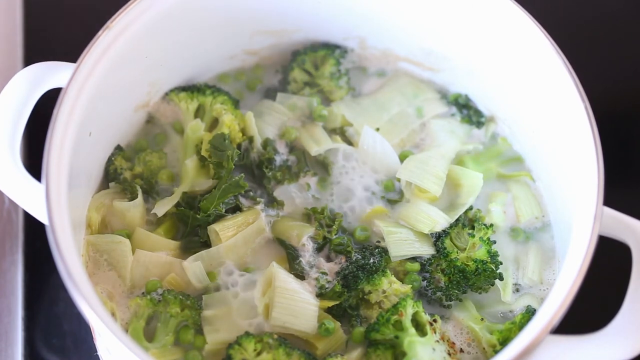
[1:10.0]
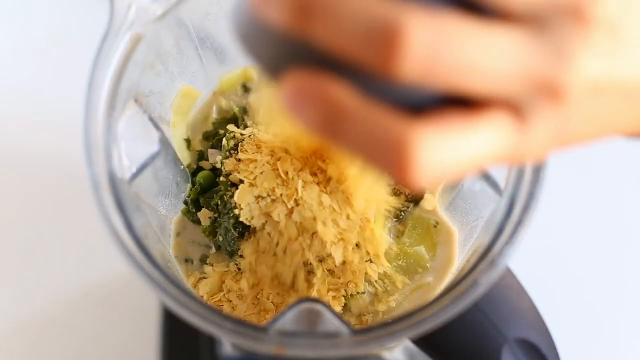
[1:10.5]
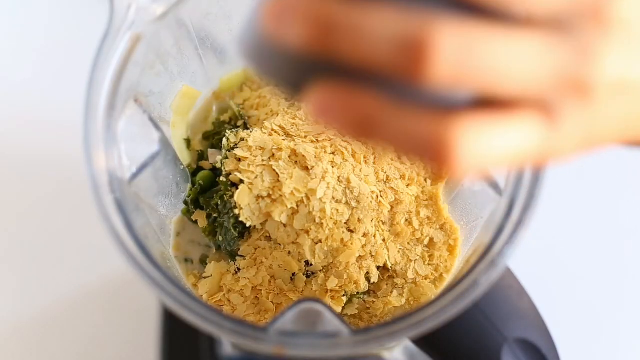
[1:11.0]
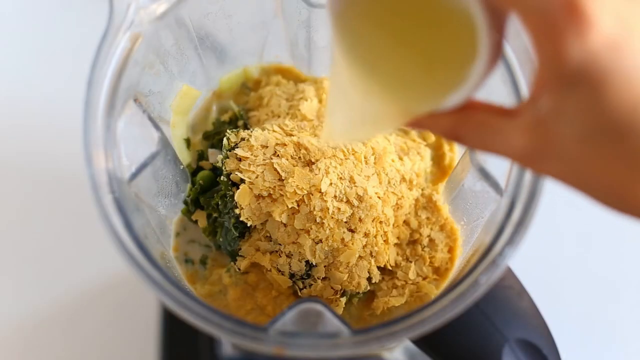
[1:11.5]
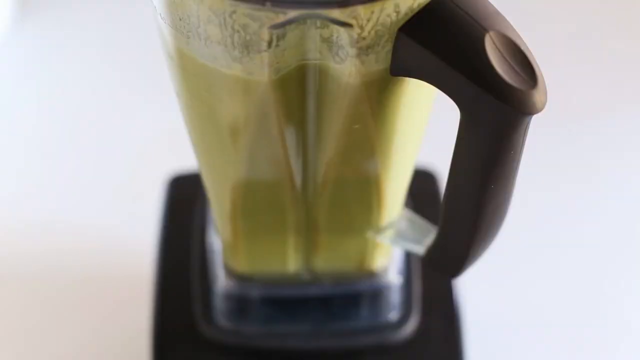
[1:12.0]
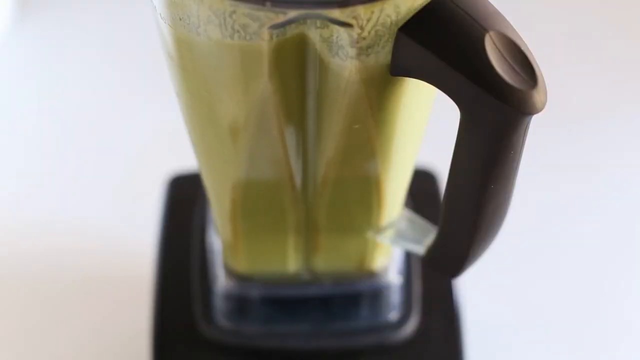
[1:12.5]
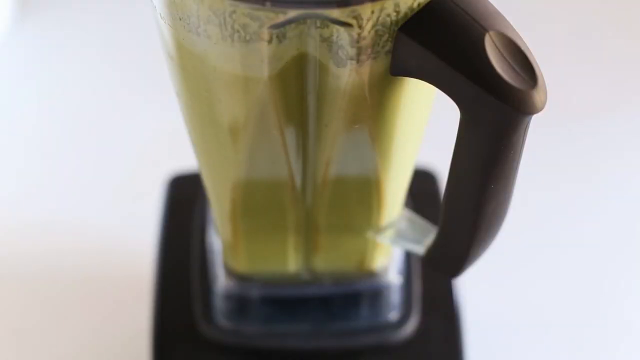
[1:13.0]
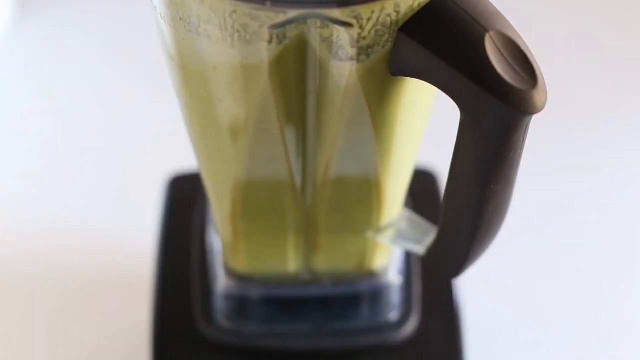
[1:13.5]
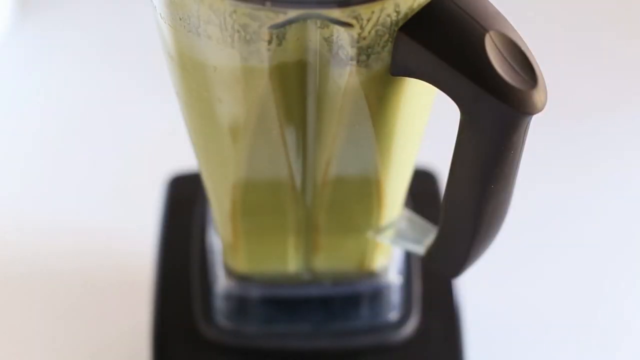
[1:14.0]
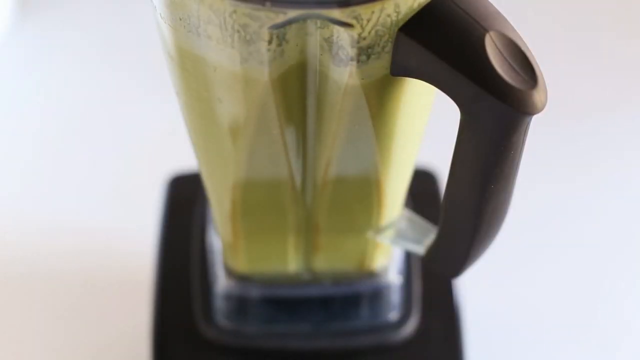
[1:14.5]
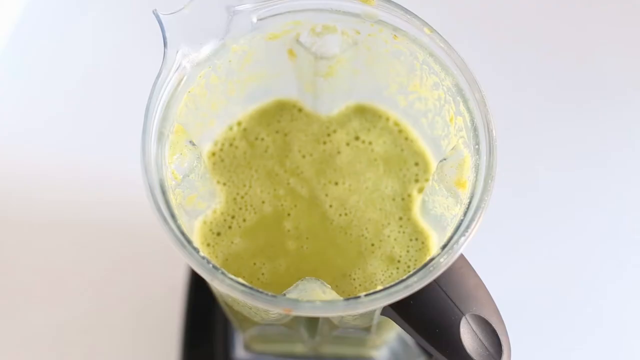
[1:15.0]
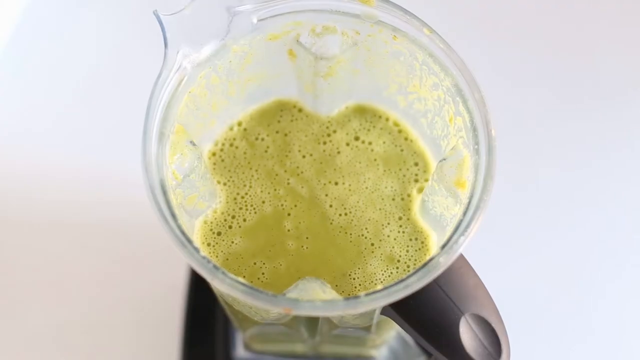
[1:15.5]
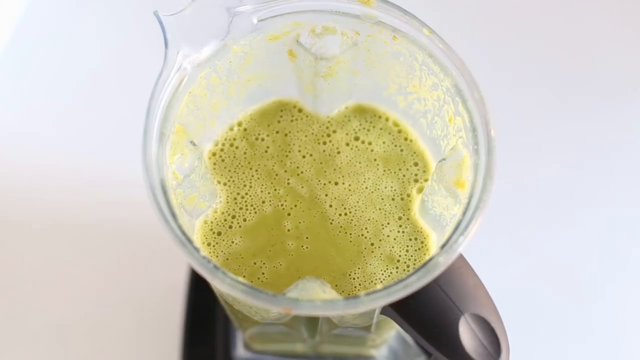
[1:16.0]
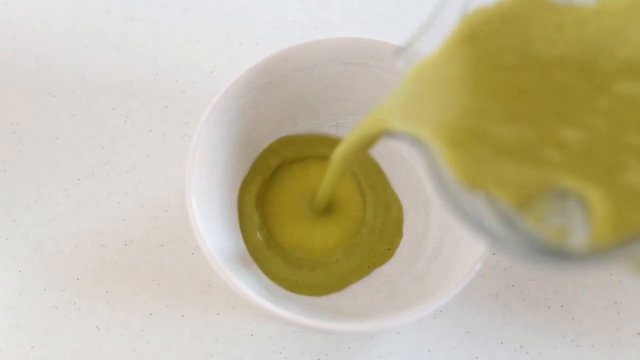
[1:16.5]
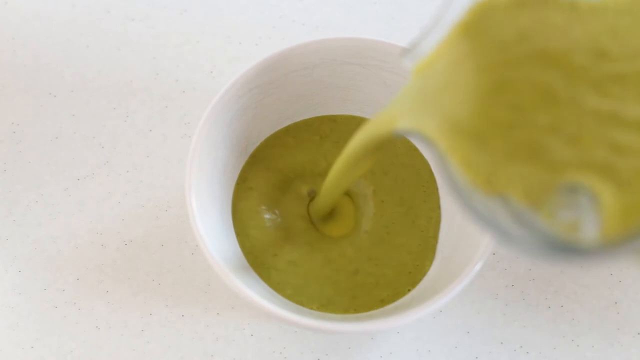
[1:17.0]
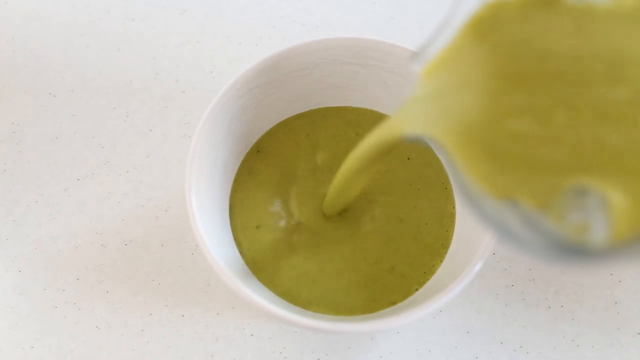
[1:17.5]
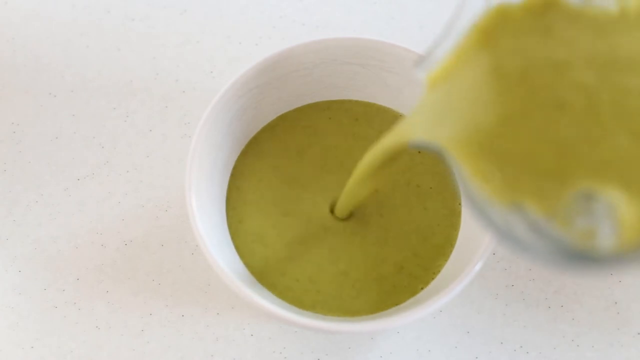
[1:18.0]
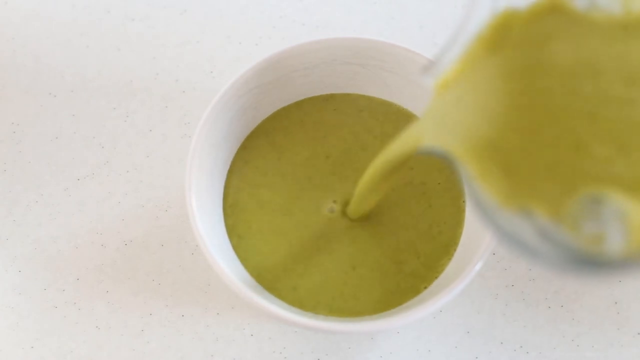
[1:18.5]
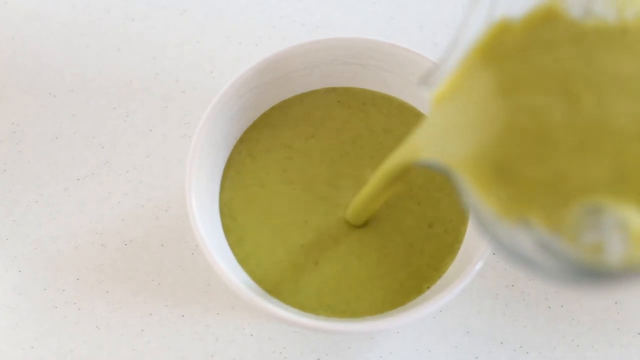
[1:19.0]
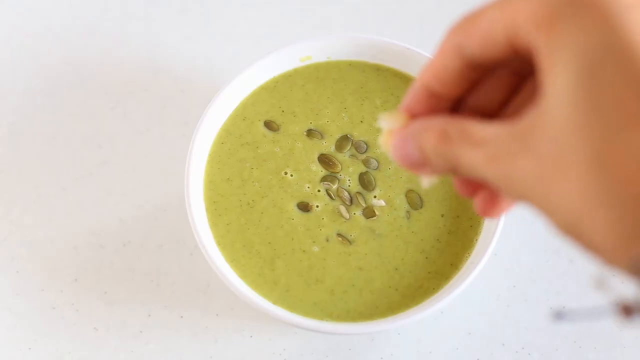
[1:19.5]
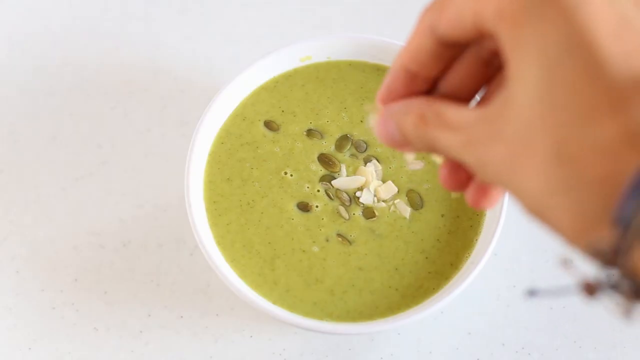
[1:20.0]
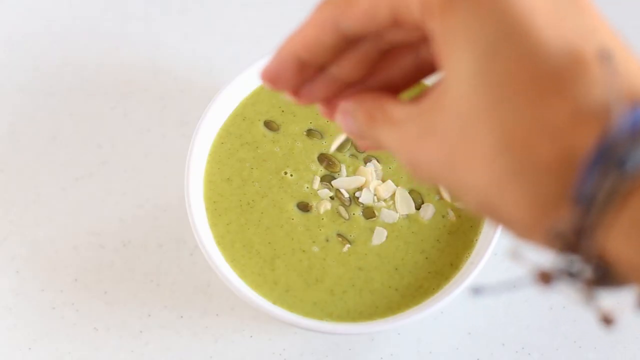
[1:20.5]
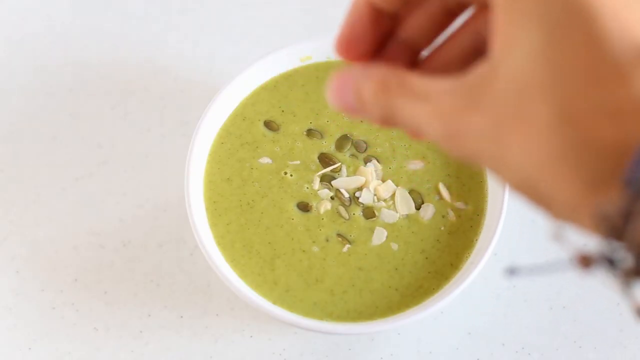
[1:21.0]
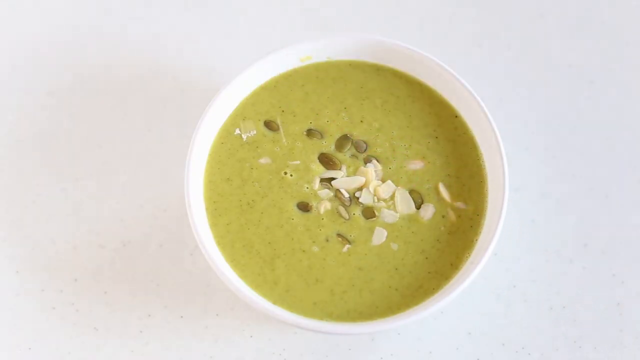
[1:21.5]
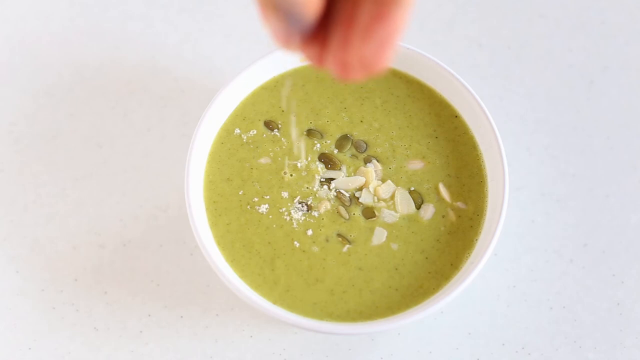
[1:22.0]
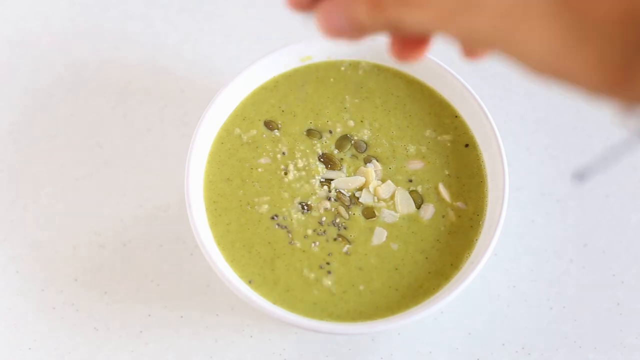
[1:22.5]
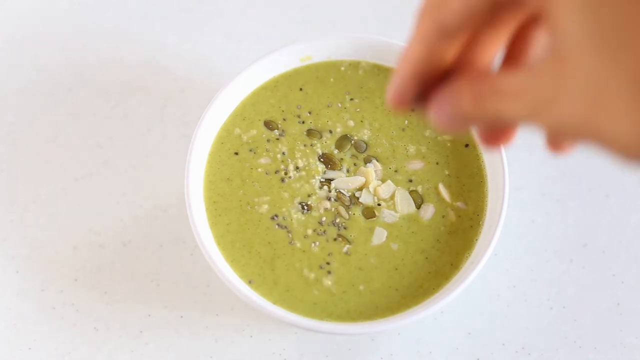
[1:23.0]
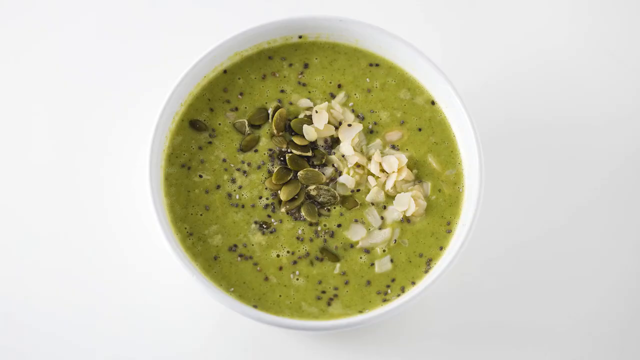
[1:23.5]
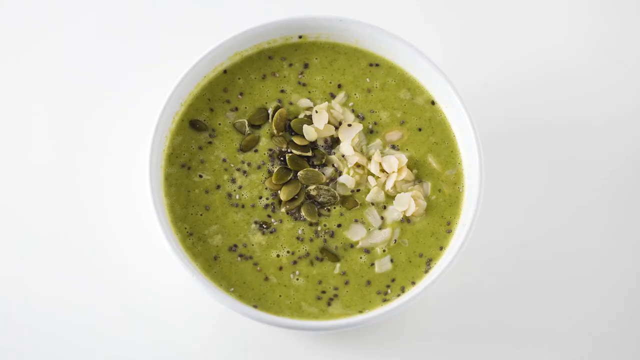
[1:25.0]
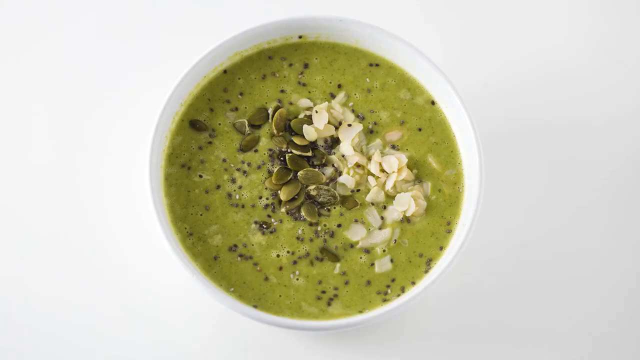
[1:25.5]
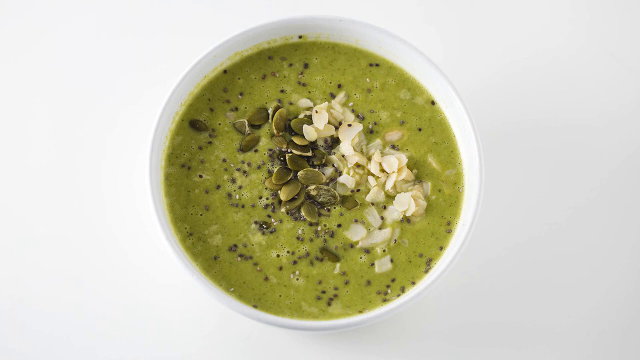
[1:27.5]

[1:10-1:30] The camera remains fixed on the pot as the water boils down. The woman then adds other ingredients into what looks like a mixer, adding the lemon juice, and the mixer starts to mash everything, with a green liquid inside it. The mixer is modern, with a brown handle, a brown base and a clear container. The mixer is shown at work breaking down the ingredients. Then the mixer appears without its lid, with the green substance inside. She pours this green substance, the soup, into a bowl and adds final touches of the ingredients seen earlier on the table; only her hands are visible. She then sprinkles the pepper on top, apparently the last ingredient, and the final dish is shown.